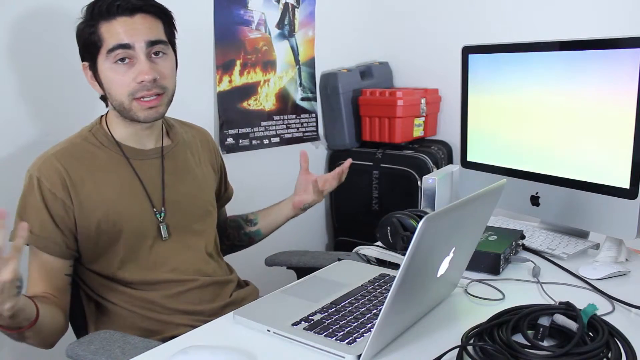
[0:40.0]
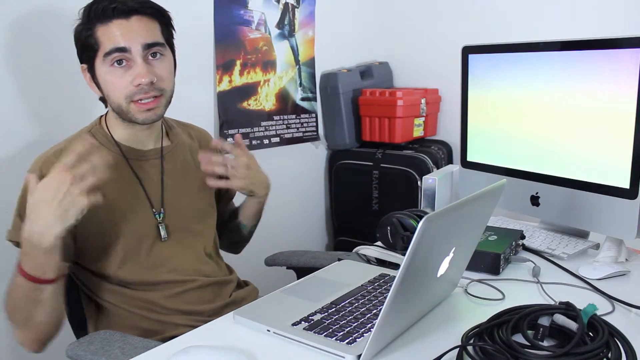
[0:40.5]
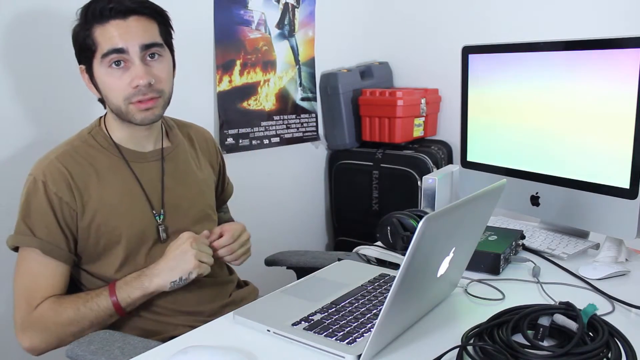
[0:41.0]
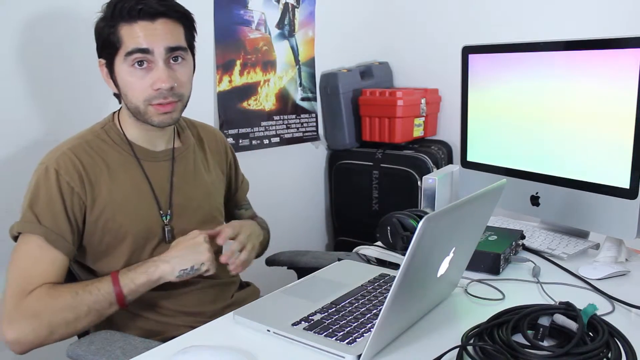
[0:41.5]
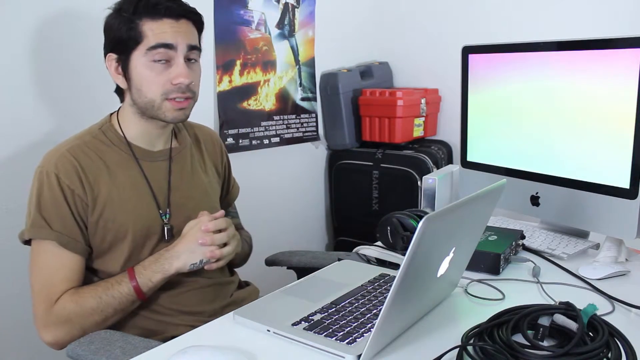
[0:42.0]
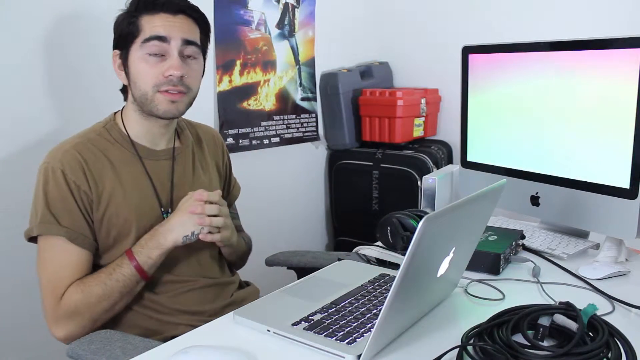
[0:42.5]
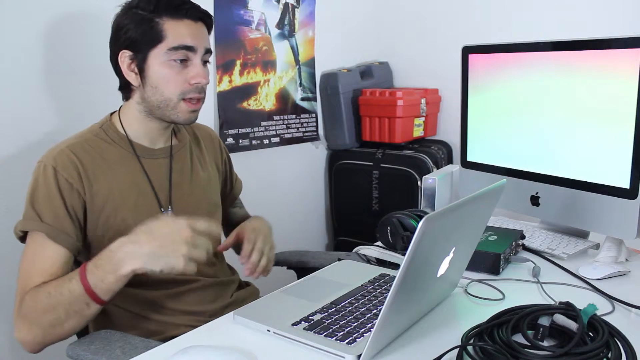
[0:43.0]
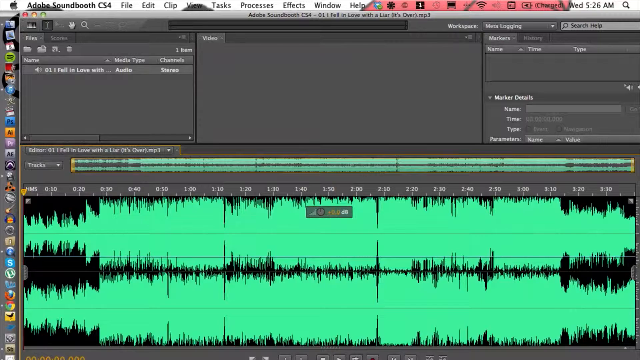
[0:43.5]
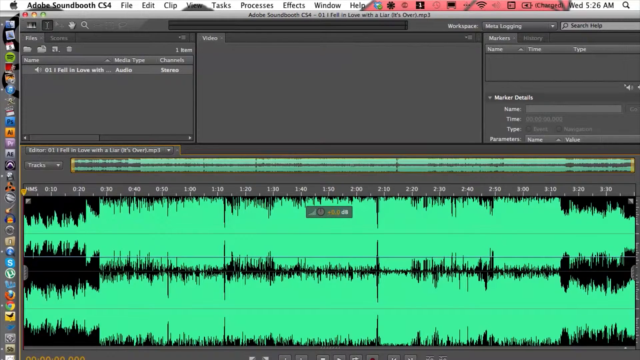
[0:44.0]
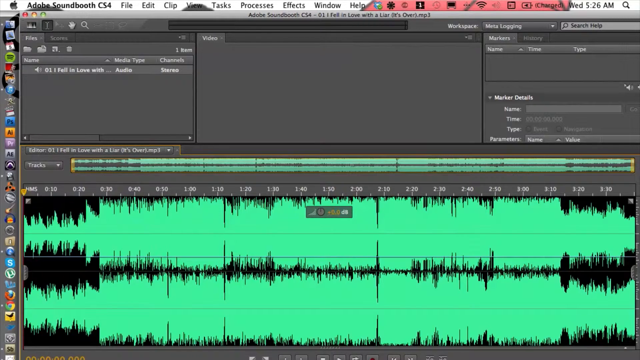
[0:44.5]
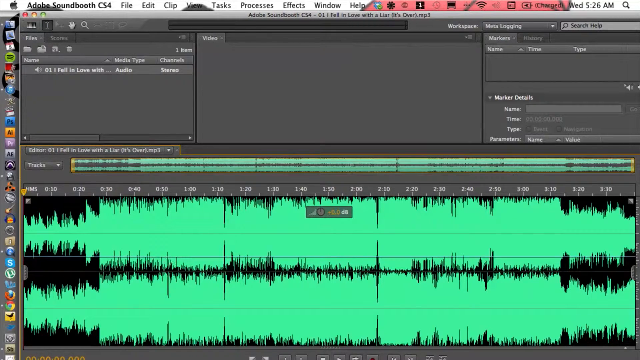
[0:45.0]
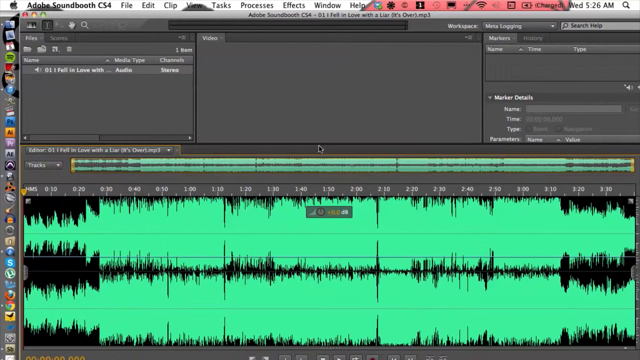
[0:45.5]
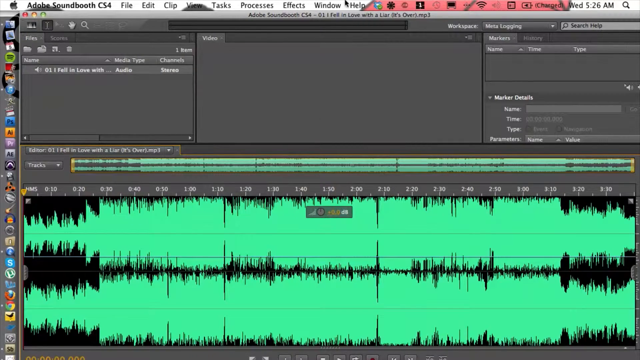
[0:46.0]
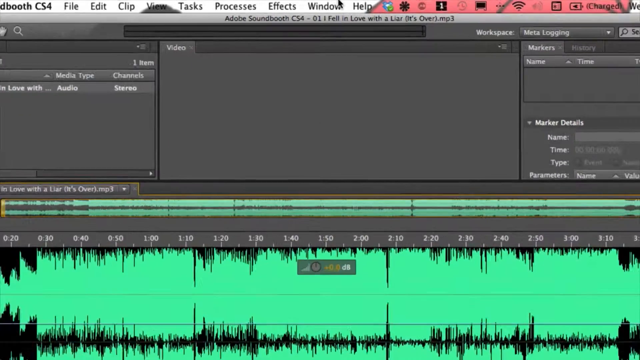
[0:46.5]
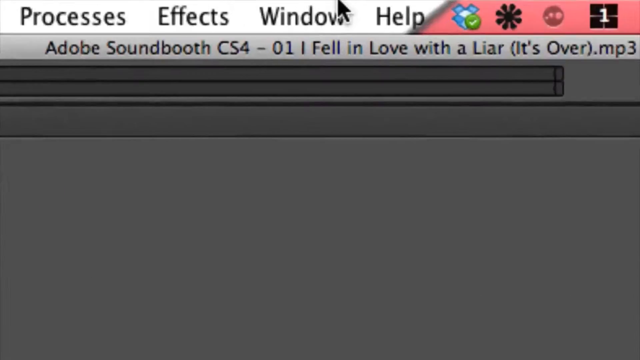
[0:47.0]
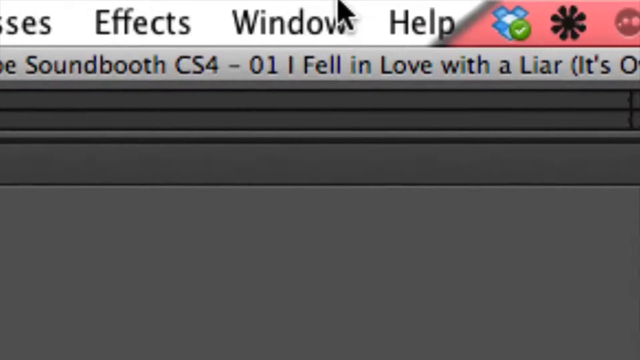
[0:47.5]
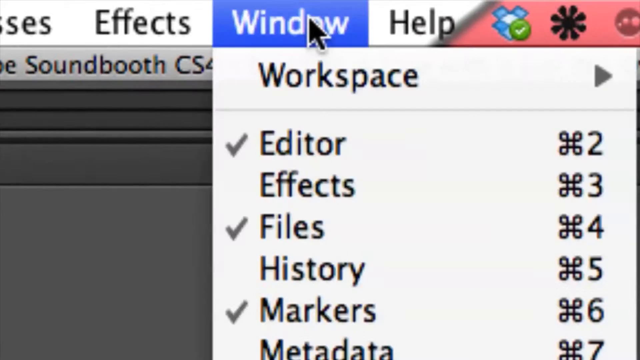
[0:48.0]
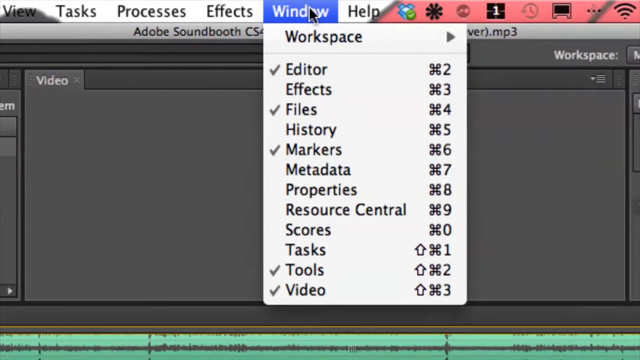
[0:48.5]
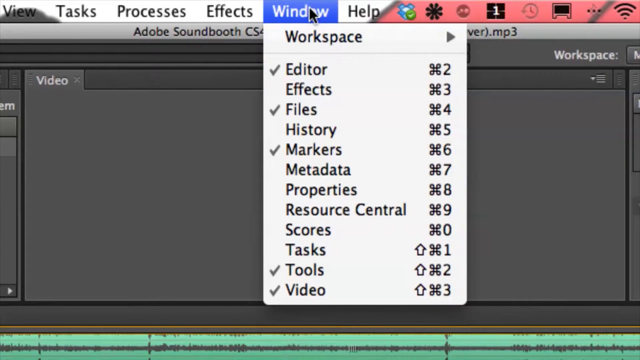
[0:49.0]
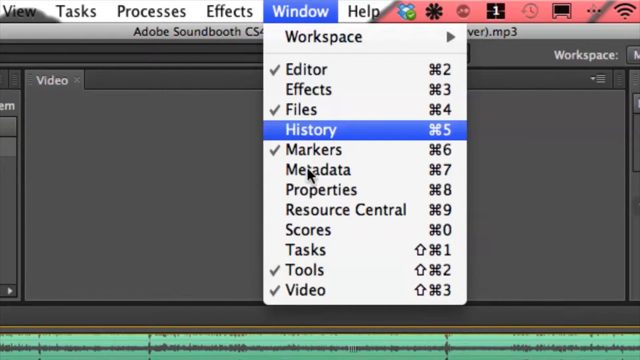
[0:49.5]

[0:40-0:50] There is a poster, what appears to be a toolbox, and some sort of box. The man holds his hands out to his sides and his eyes are kind of squinting. He looks to his right; he has short black hair and wears a necklace with something like a dog tag hanging from it. A screen to his left is lit up with an Apple logo. He gestures with his hands and looks down. The view then shows the program, with the interface showing some waves, and zooms in at the top on a window, highlighting something.